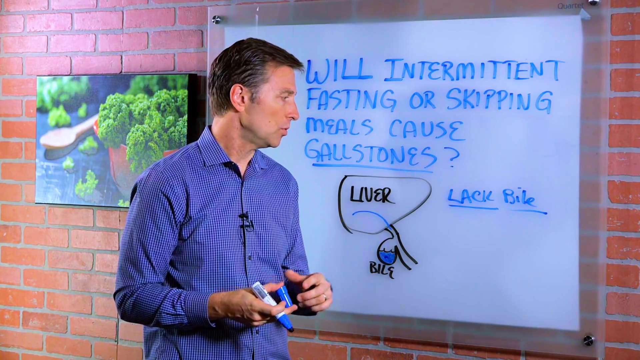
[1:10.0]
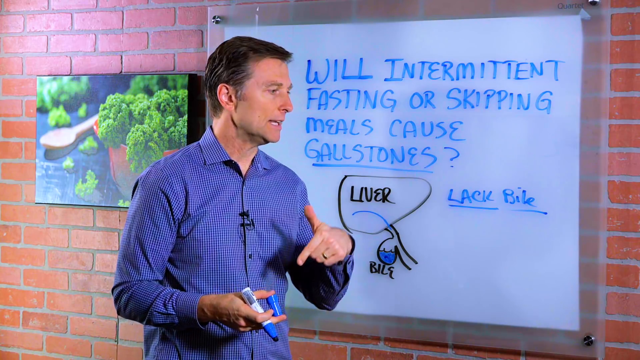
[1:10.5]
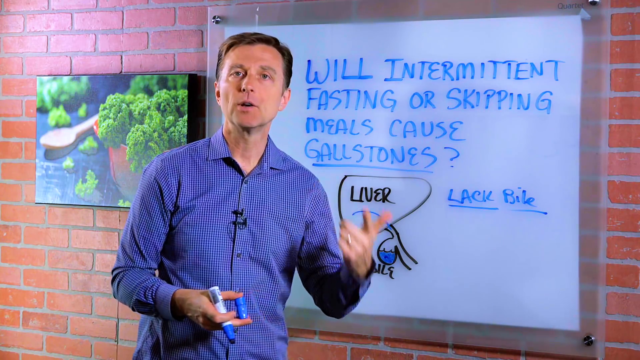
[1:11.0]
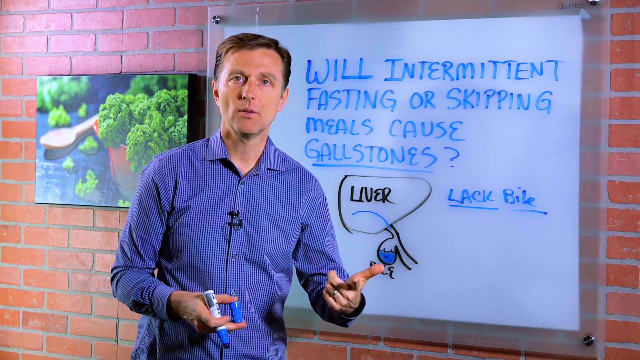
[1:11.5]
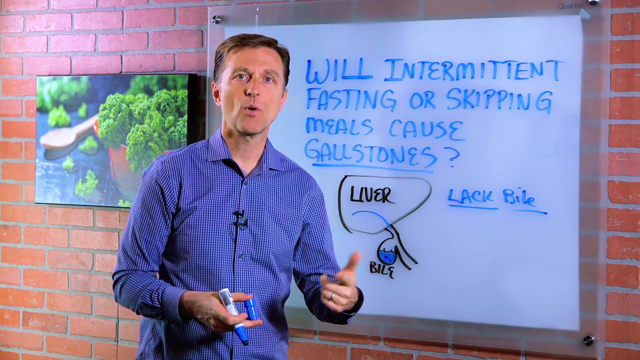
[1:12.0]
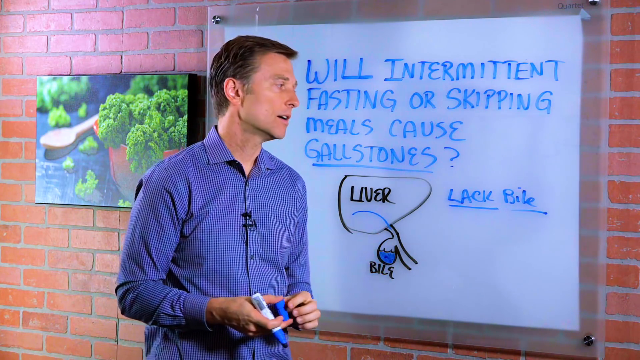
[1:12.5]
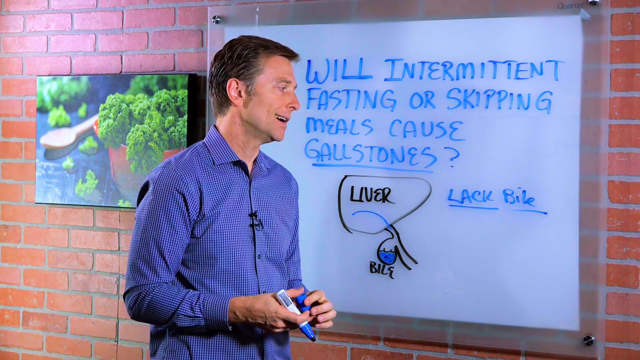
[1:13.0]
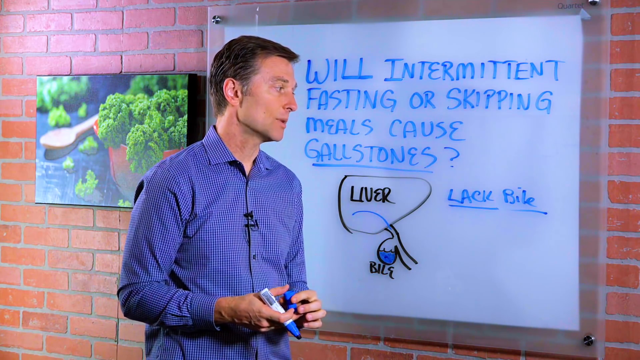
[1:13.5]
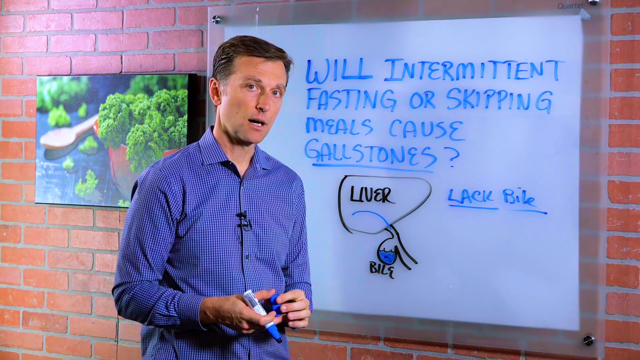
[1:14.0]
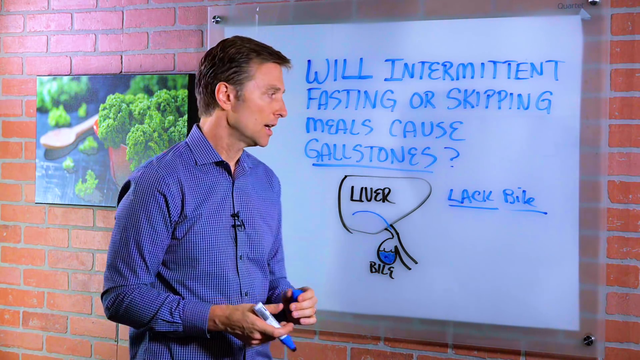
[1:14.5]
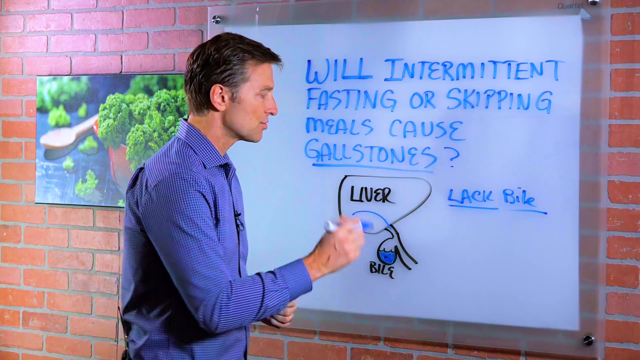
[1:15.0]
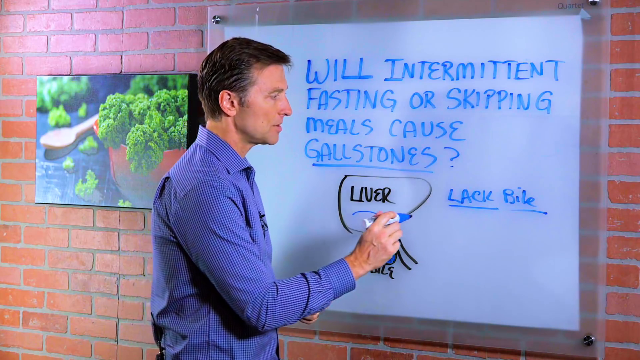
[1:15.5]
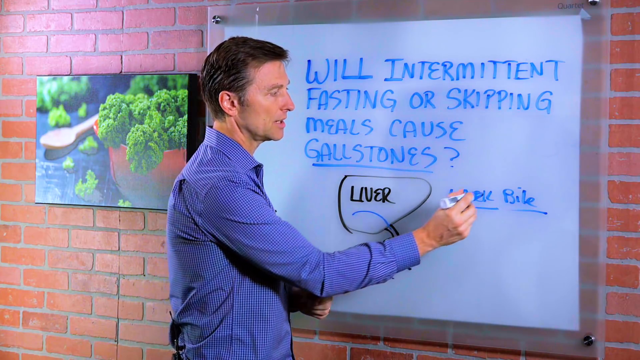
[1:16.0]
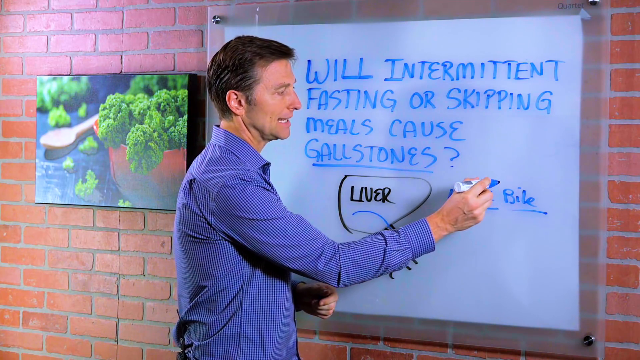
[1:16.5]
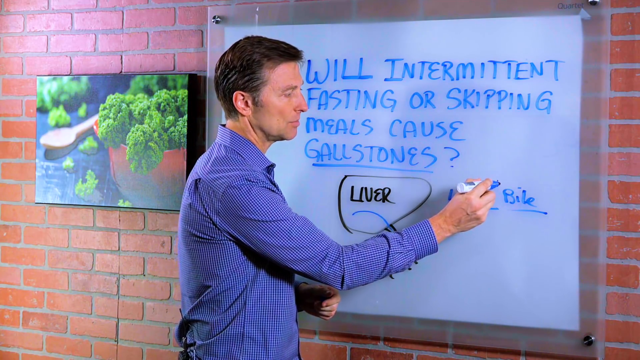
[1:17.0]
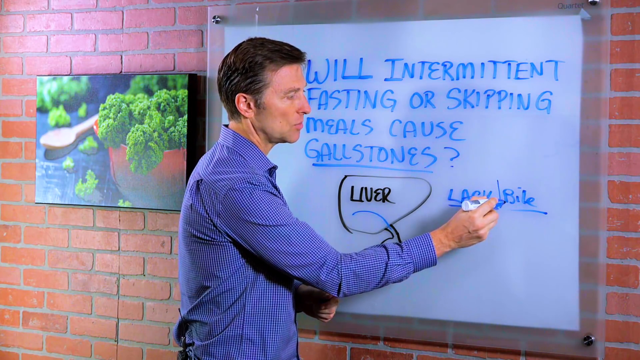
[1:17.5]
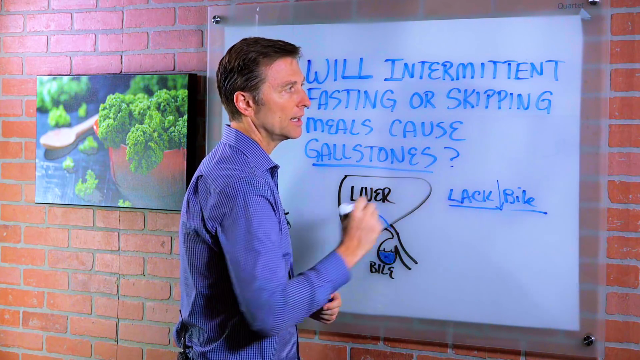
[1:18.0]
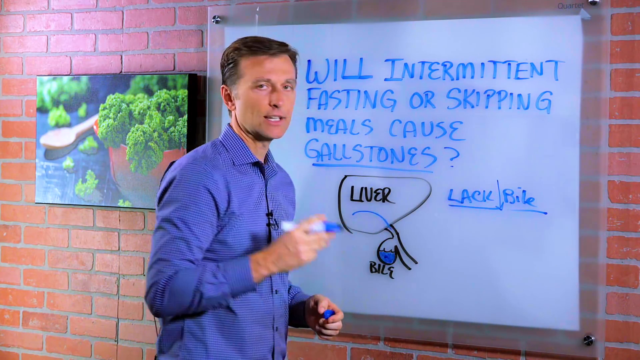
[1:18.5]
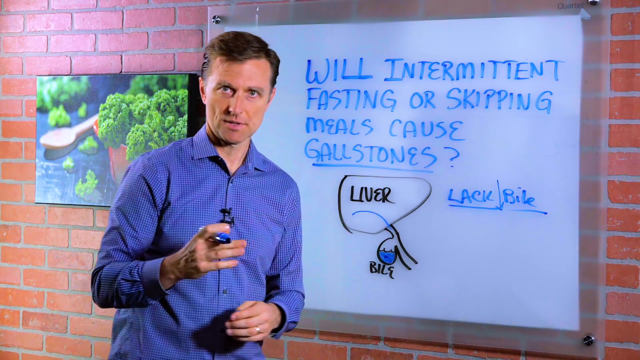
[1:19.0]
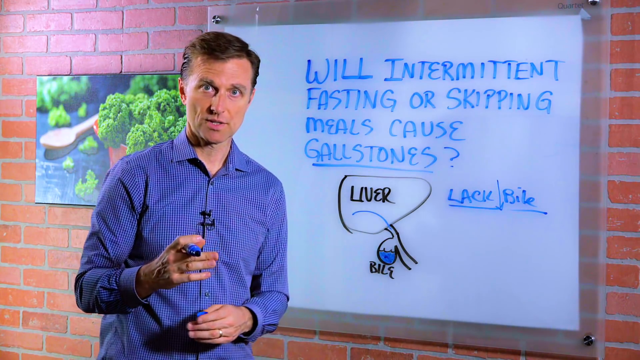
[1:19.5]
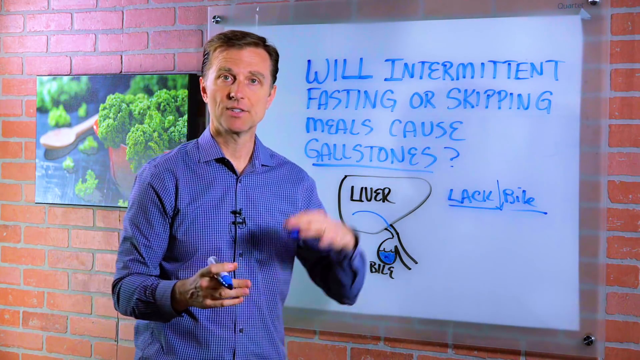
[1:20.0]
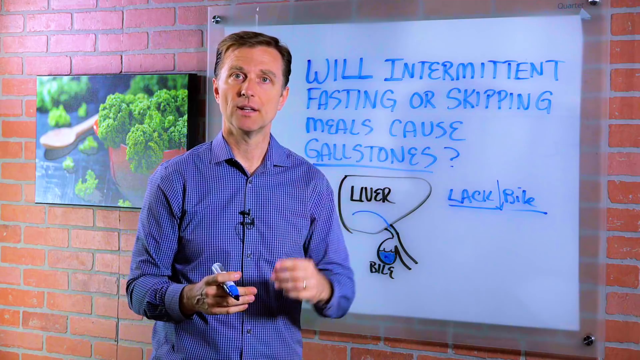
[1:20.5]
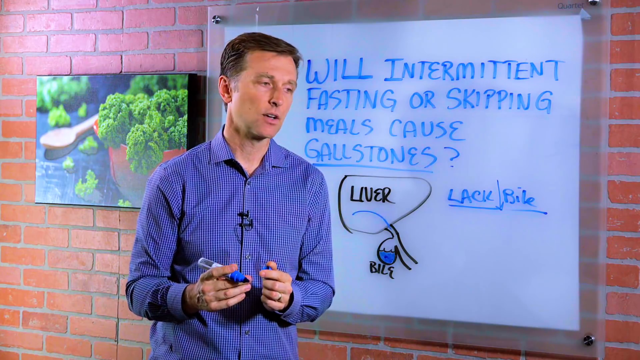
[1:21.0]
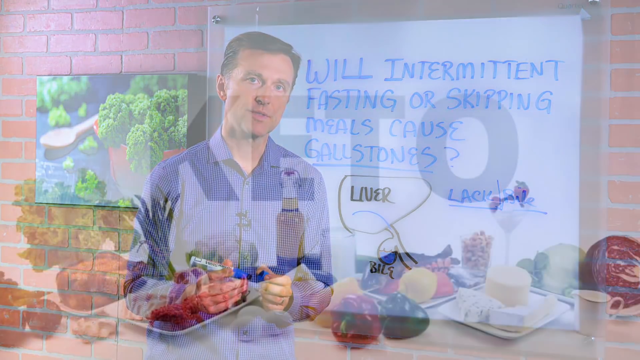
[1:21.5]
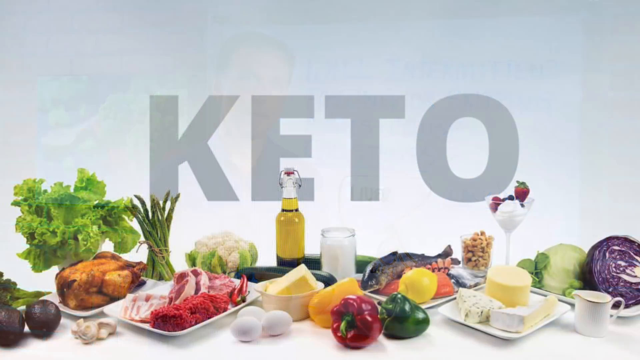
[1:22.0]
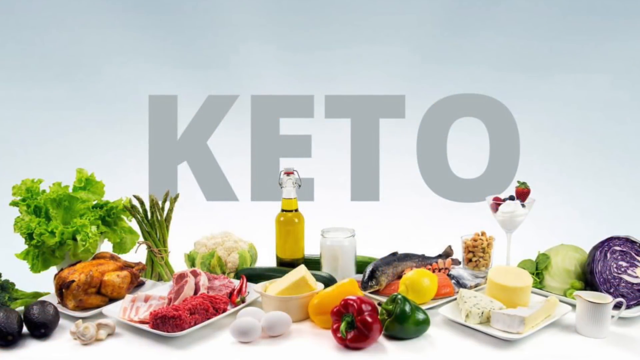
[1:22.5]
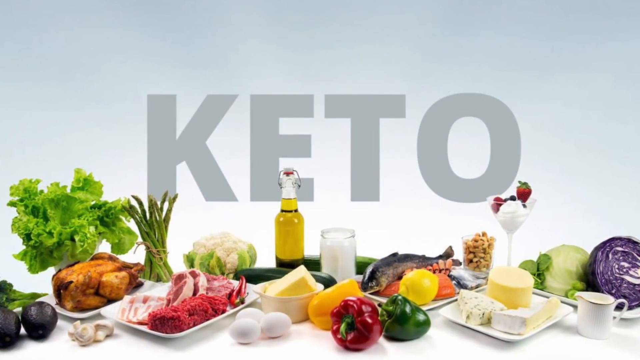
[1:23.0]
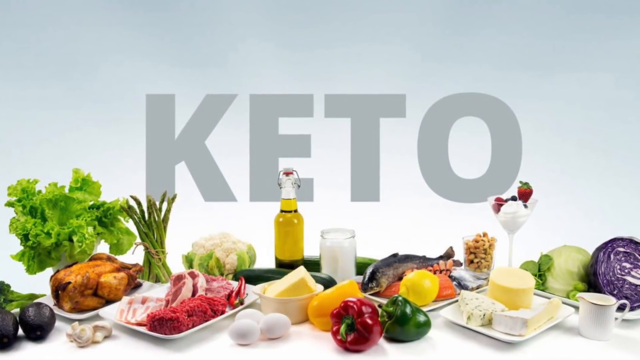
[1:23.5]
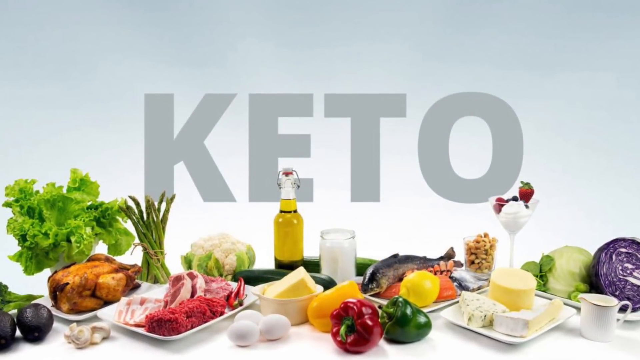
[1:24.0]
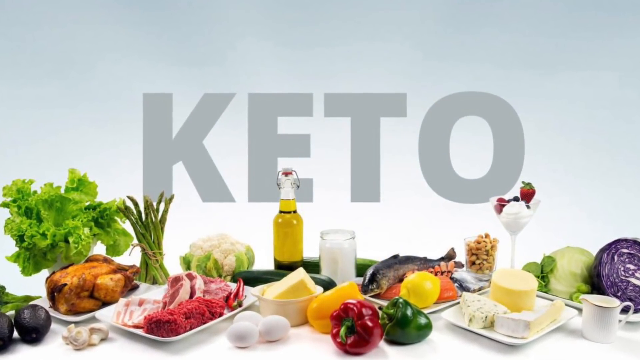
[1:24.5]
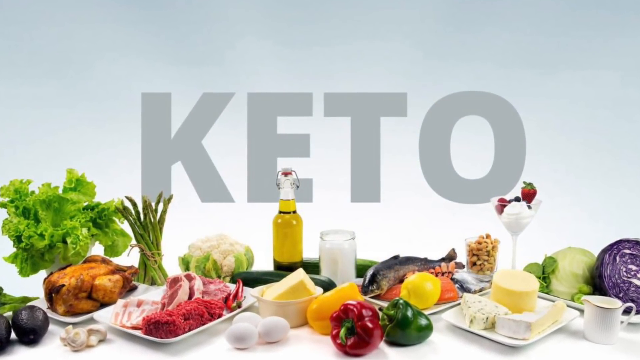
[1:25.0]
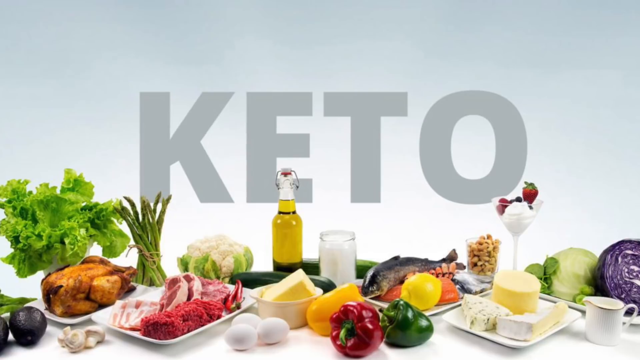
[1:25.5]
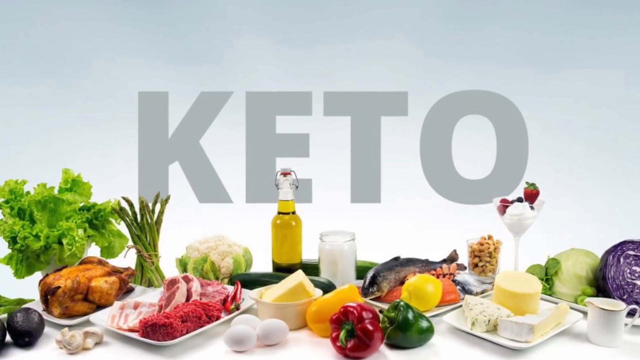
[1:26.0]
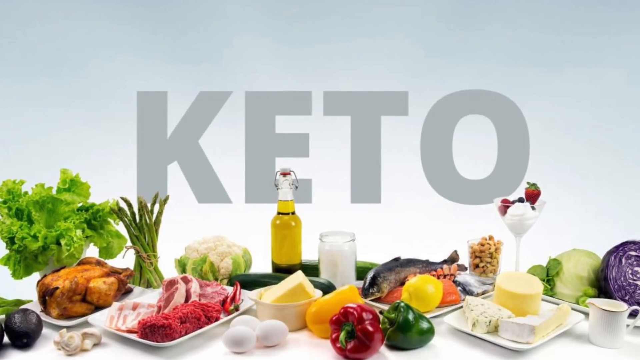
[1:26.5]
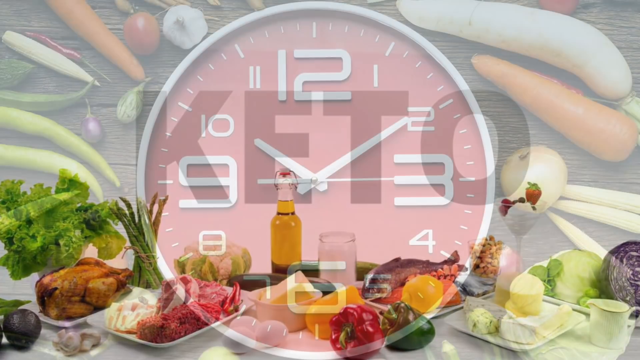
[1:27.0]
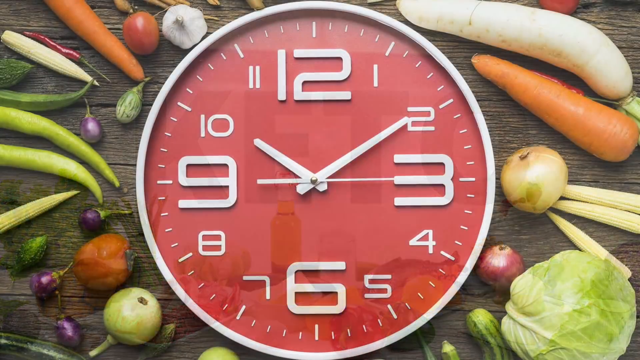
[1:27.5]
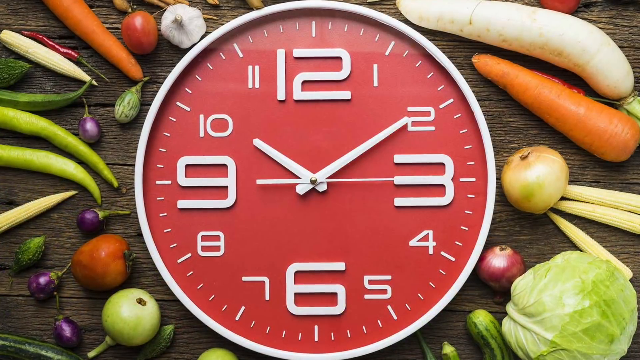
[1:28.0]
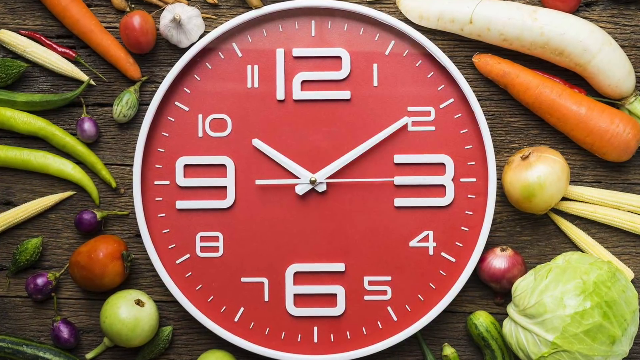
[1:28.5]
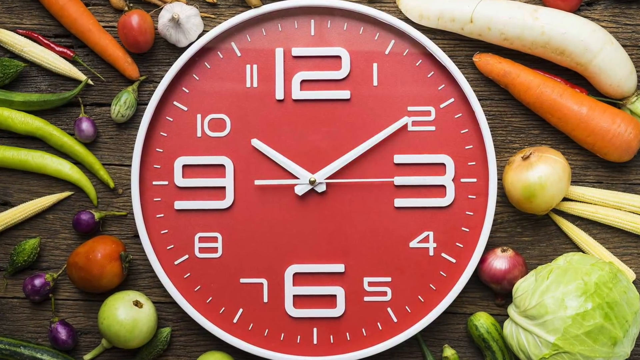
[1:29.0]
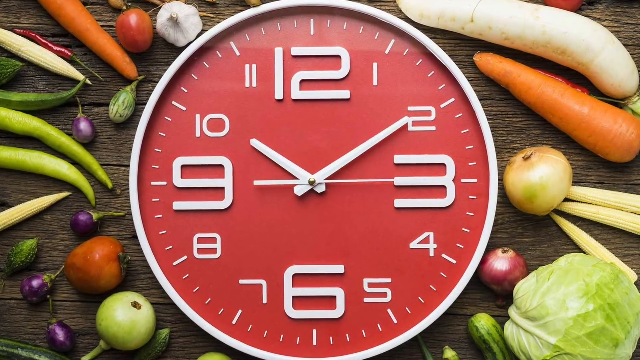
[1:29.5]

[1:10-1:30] At the whiteboard, the man draws a downward arrow between "LACK" and "bile". Then a white background appears with "KETO" in gray capital letters, with all kinds of foods in front of the word: meats, vegetables, what looks like olive oil, fish, nuts, cheese, lemon, cauliflower, fruit, yogurt, purple cabbage, what looks like kale, asparagus, butter, bell peppers, mushrooms, cream and eggs. Then a clock appears showing ten minutes after ten, with a red face and white numbers, the 12, 3, 6 and 9 very large and the other numbers small. Around the clock are small eggplants, carrots, turnips, baby corn, tomatoes, garlic, onions, what may be wax beans, and okra.